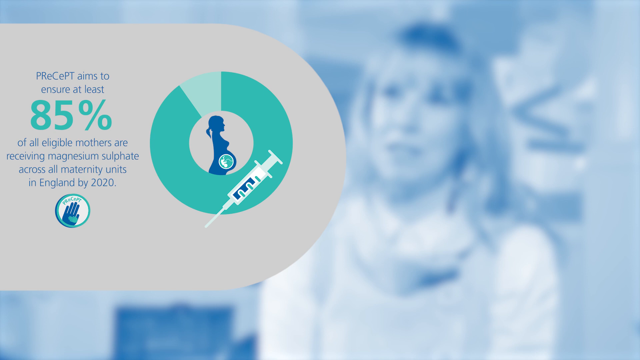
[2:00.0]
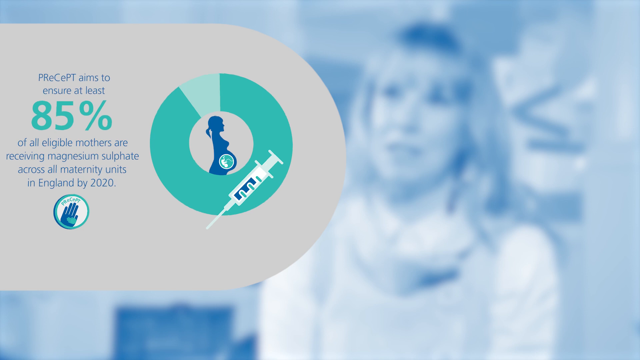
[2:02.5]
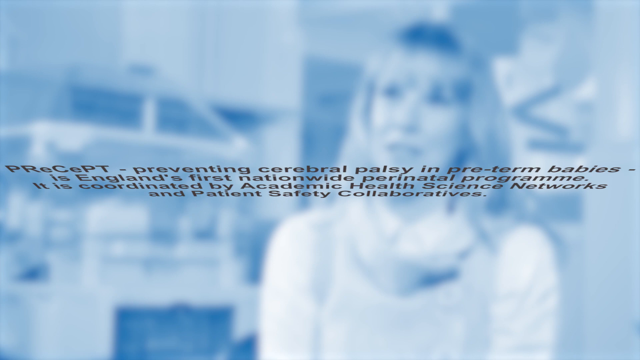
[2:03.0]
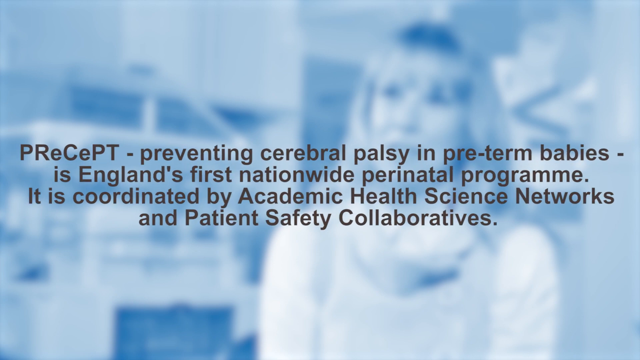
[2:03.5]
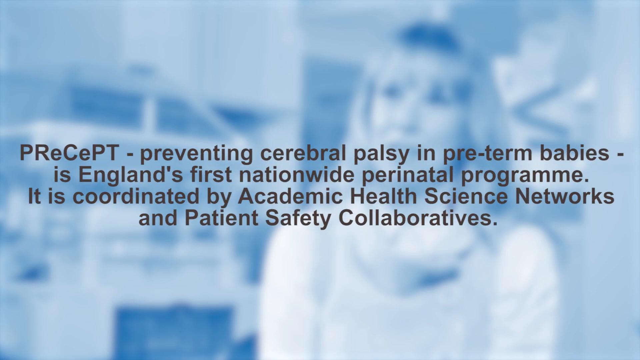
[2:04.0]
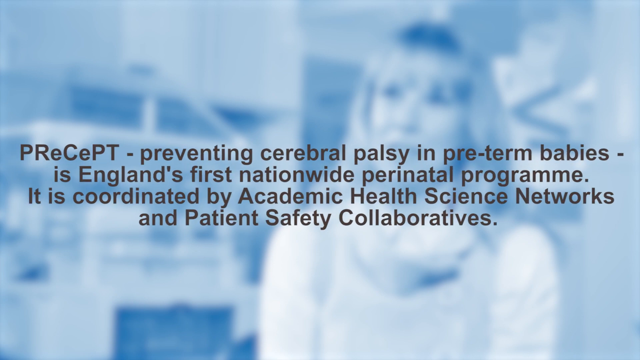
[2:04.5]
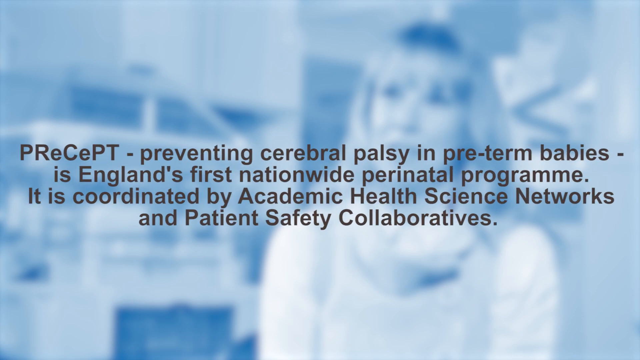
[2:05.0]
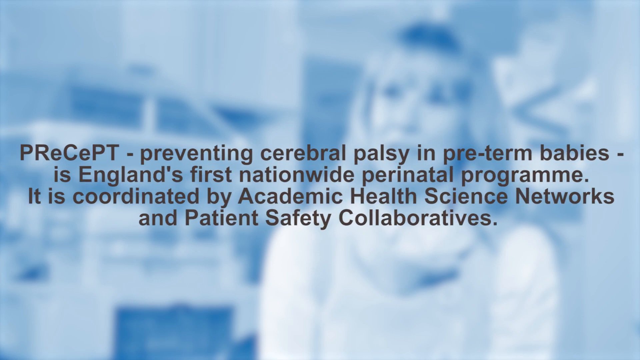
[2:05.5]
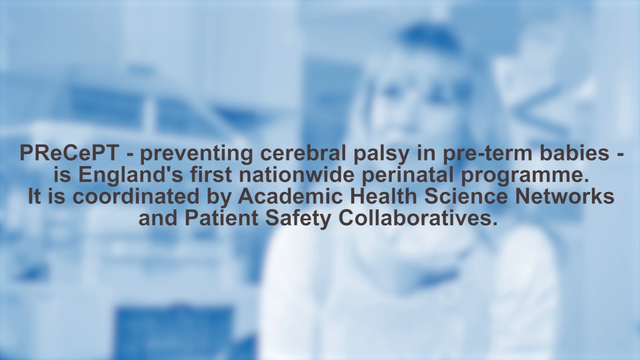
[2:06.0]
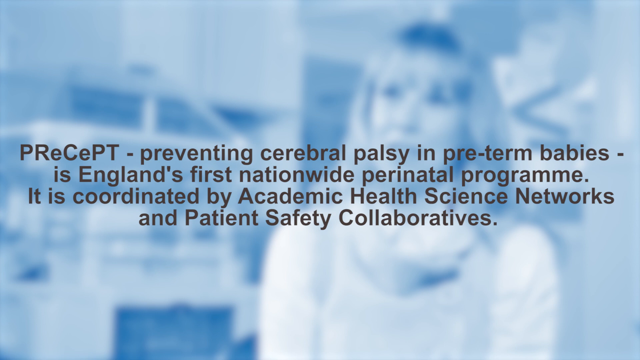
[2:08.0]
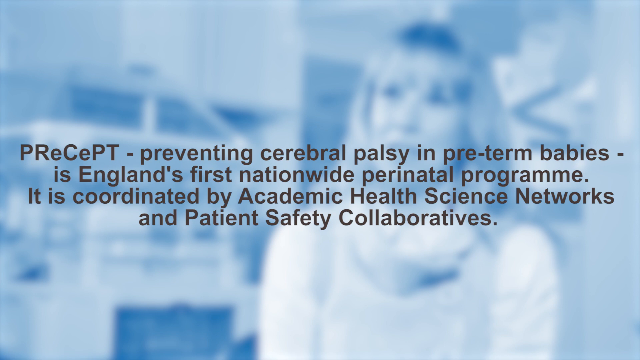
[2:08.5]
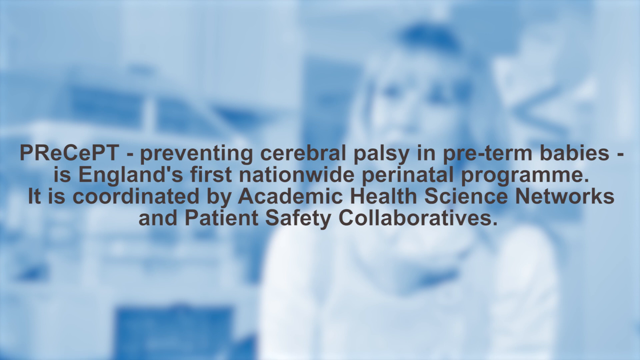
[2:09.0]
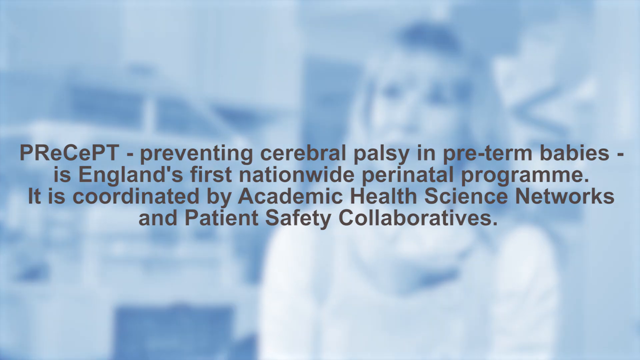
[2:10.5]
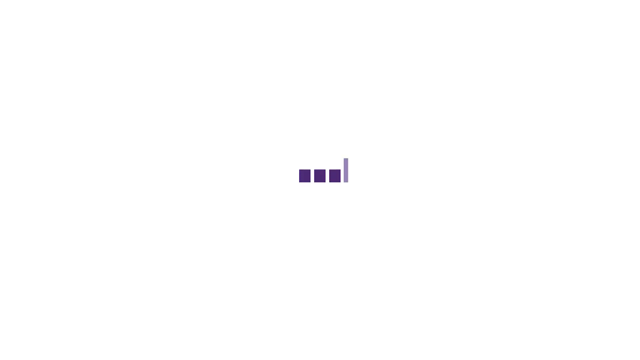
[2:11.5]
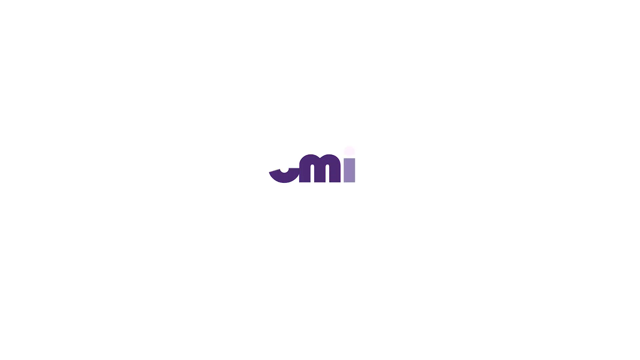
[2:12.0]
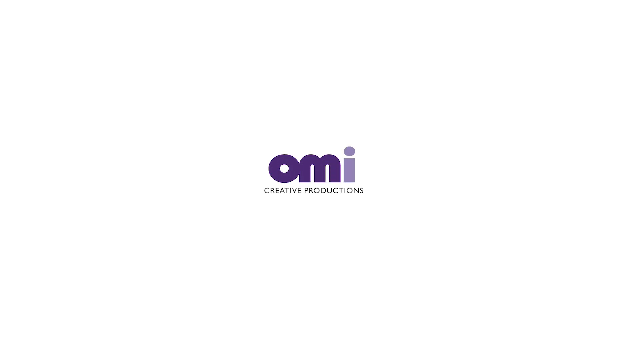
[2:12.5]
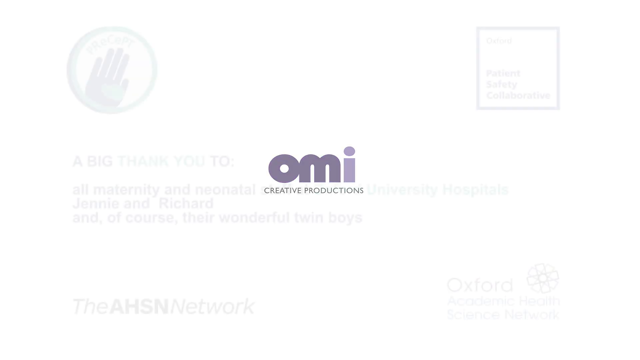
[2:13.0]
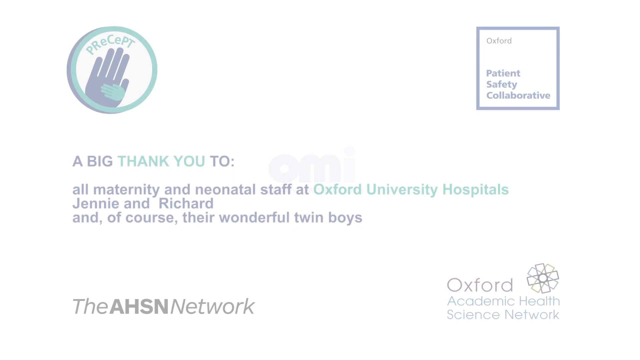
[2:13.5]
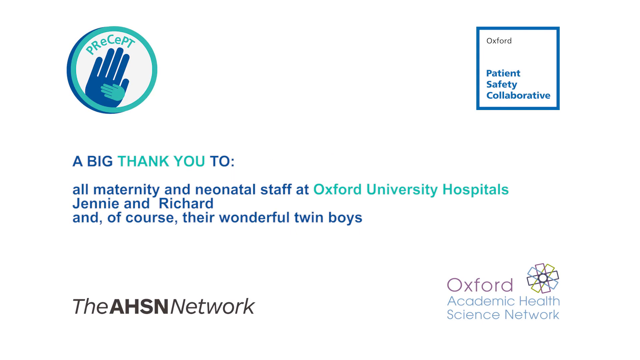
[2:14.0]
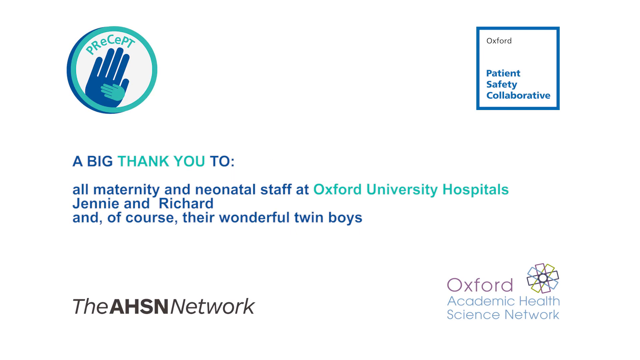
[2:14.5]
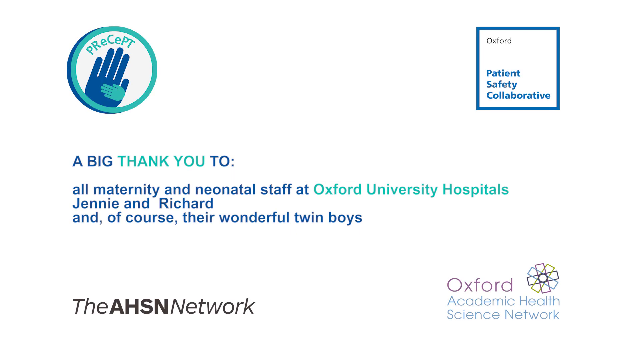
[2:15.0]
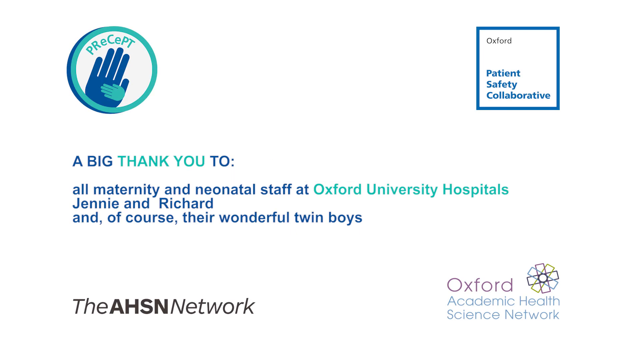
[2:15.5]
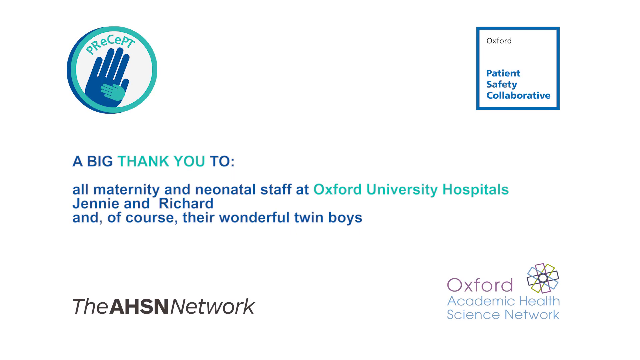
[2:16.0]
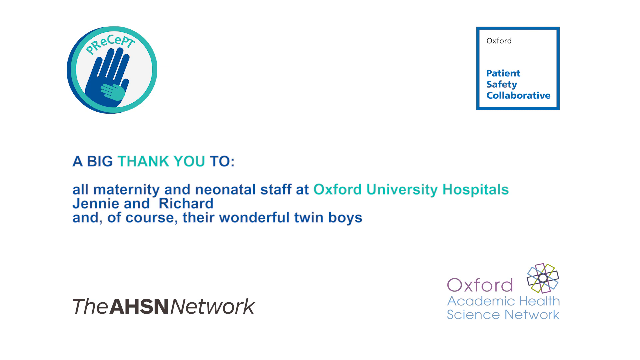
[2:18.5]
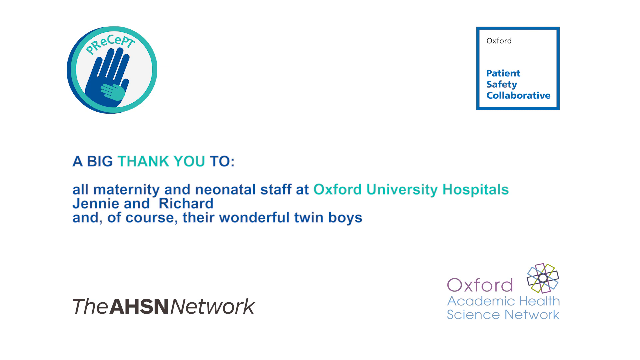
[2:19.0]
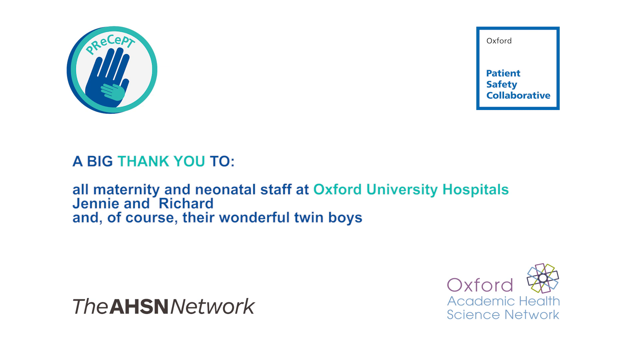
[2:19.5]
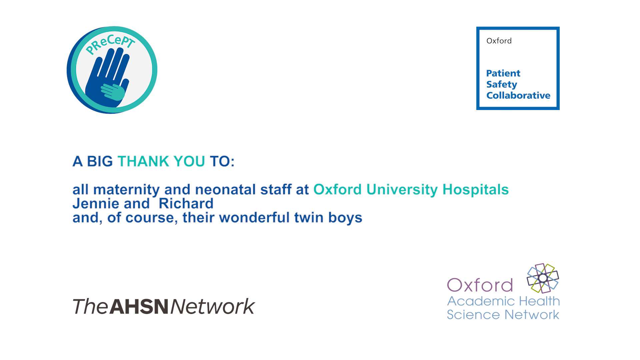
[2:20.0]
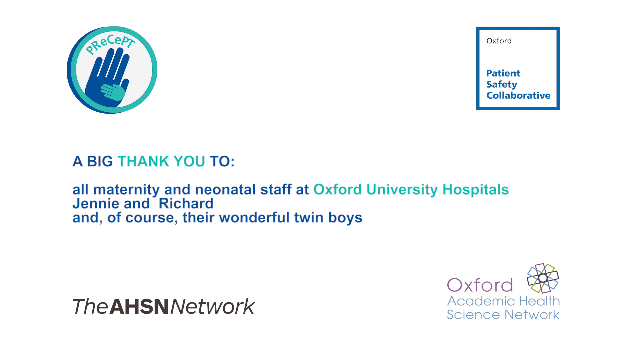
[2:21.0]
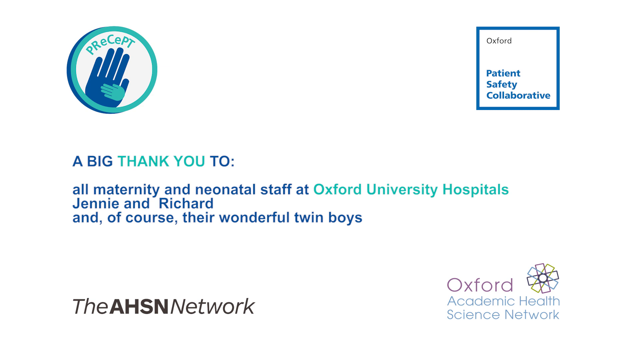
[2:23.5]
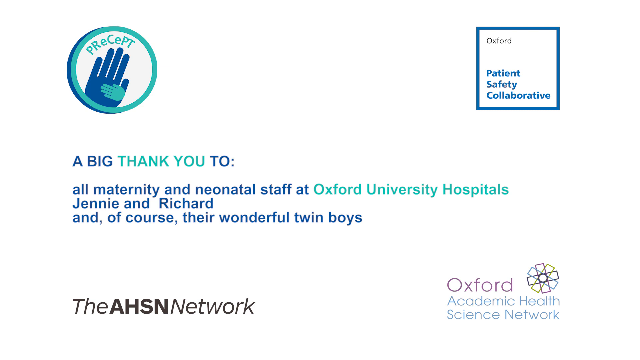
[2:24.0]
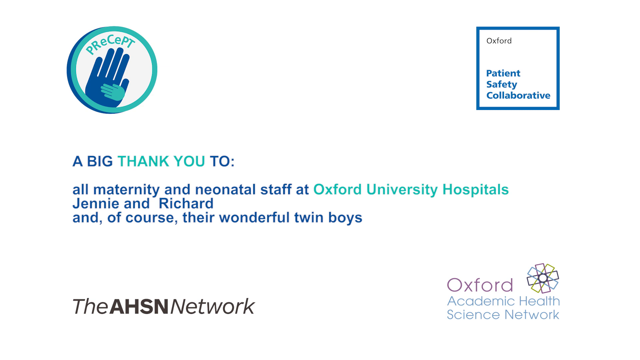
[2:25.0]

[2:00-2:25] The infographic leaves the screen, and dark grey text appears right across it, with Jenny still in the background, blurred and made transparent in a pale blue background. The text reads "PRECEPT - preventing cerebral palsy in preterm babies - is England's first nationwide perinatal program. It is coordinated by academic health science networks and patient safety collaboratives." and takes up the whole middle section of the screen. The screen then goes white and a logo appears: dark purple, quite big letters "OM" followed by a pale lilac "I", reading "OMI", with "creative productions" in purple capital letters underneath. Blue text then reads "a big thank you to all maternity and neonatal staff at Oxford University Hospitals Jenny and Richard and of course their wonderful twin boys". The same logos from the start surround it, with Oxford Patient Safety Collaborative and Oxford Academic Health Science Network in the bottom right corner and the AHSN Network in the bottom left corner.